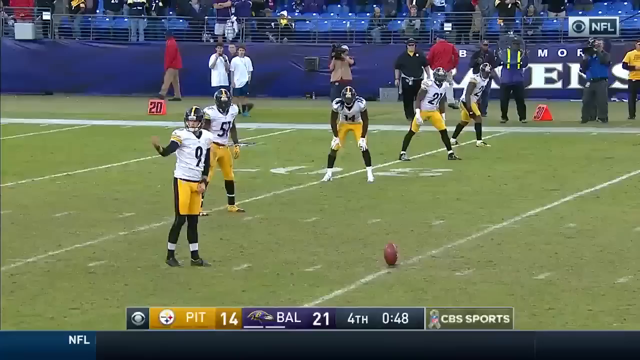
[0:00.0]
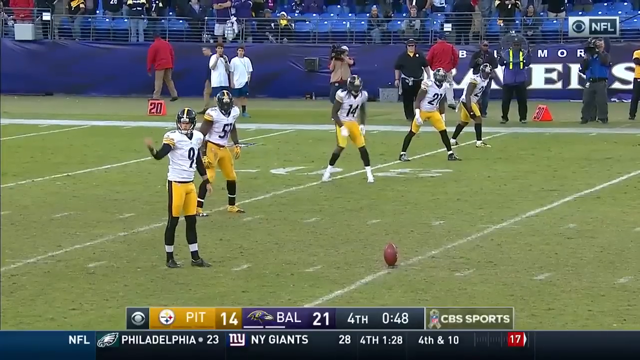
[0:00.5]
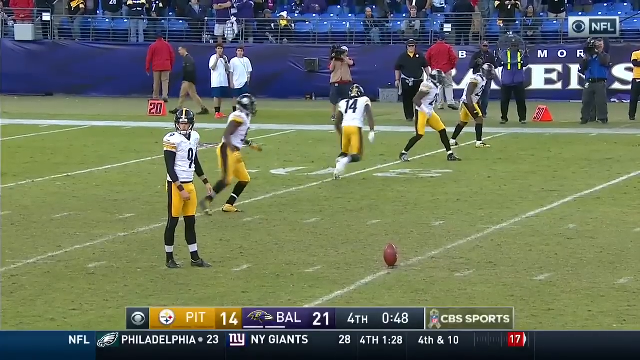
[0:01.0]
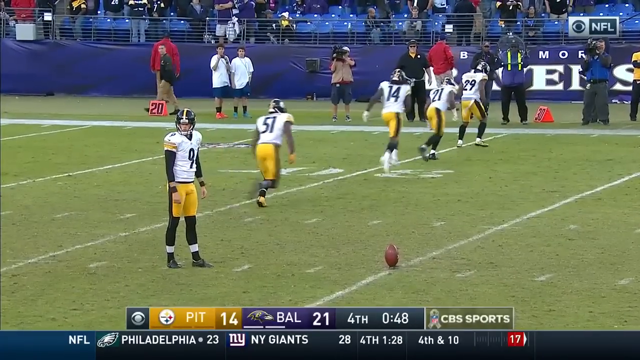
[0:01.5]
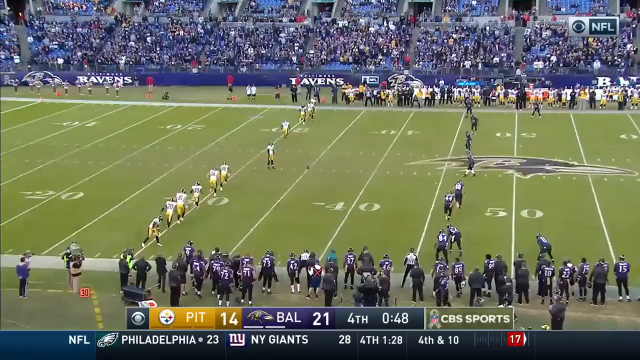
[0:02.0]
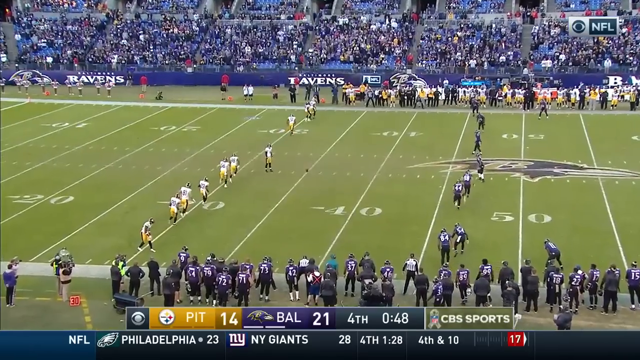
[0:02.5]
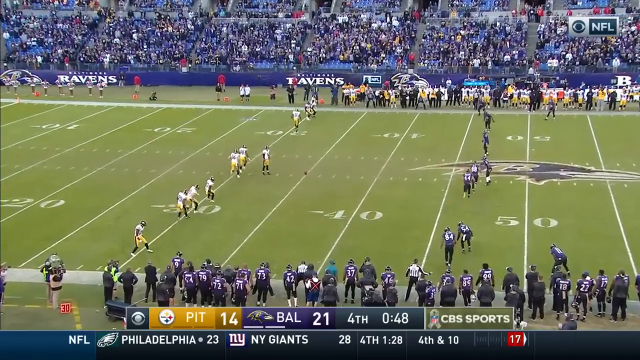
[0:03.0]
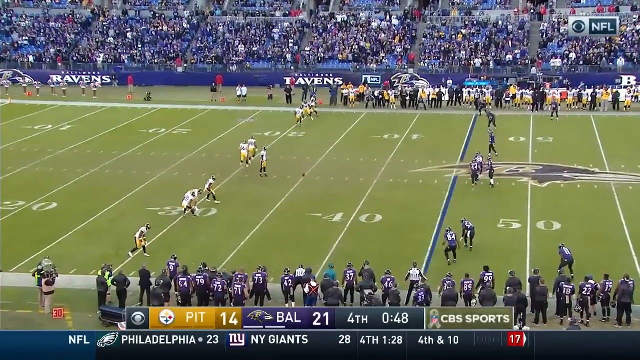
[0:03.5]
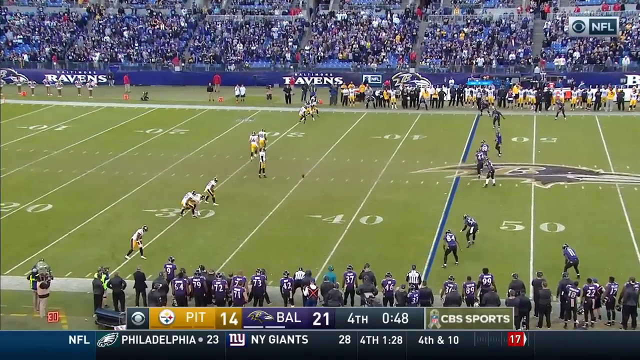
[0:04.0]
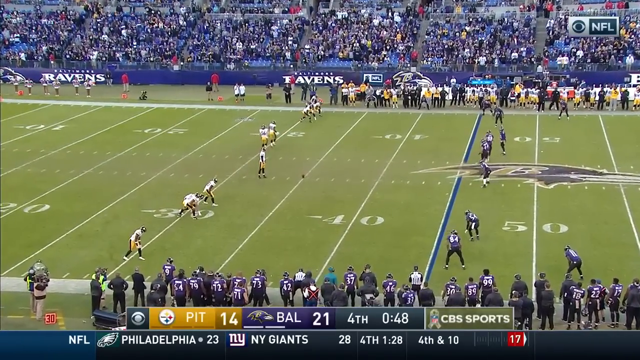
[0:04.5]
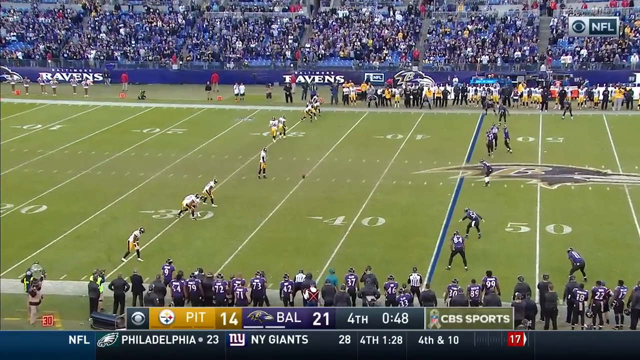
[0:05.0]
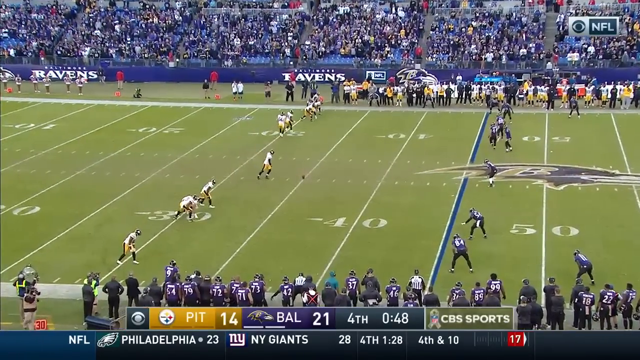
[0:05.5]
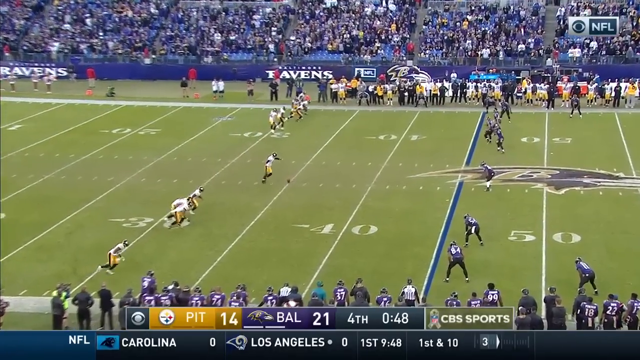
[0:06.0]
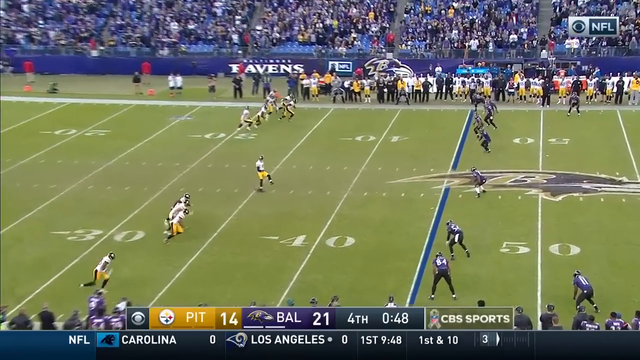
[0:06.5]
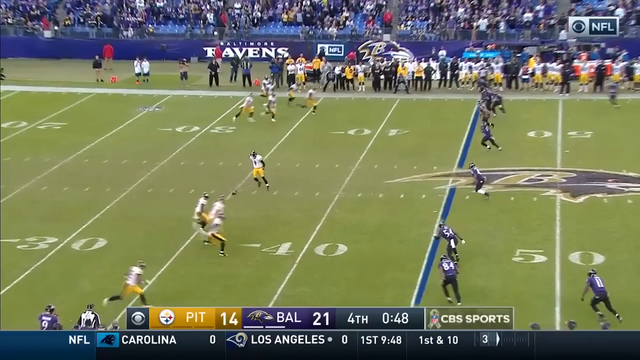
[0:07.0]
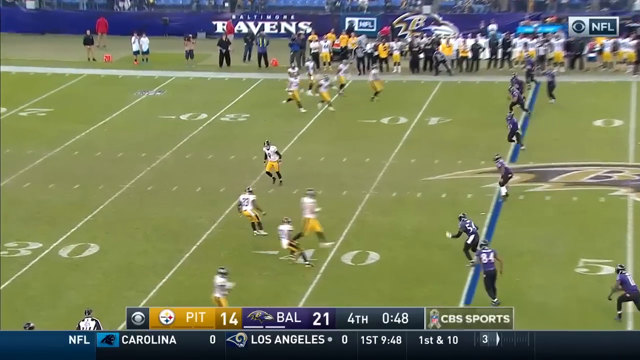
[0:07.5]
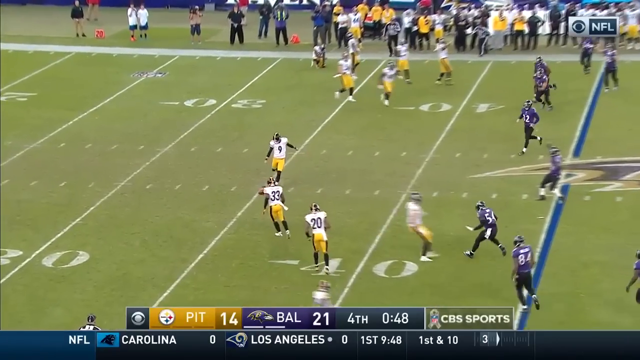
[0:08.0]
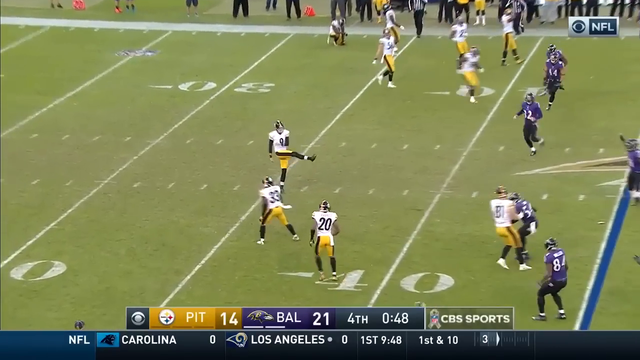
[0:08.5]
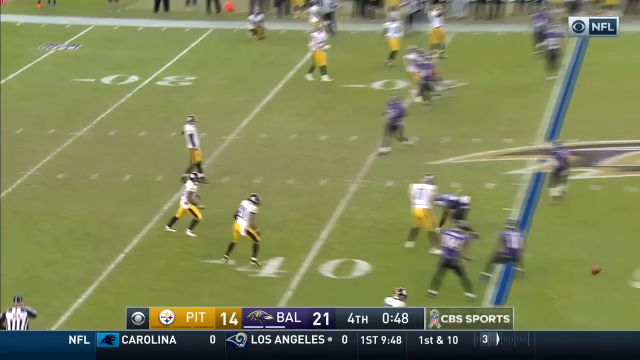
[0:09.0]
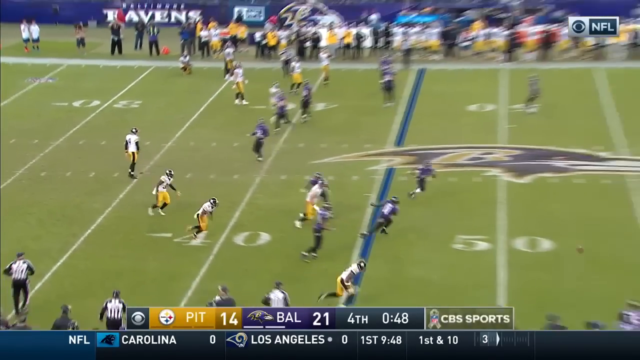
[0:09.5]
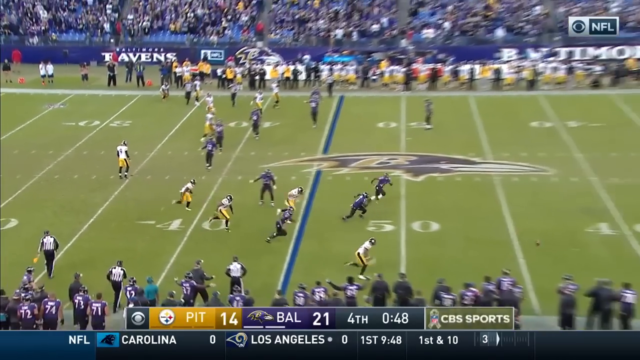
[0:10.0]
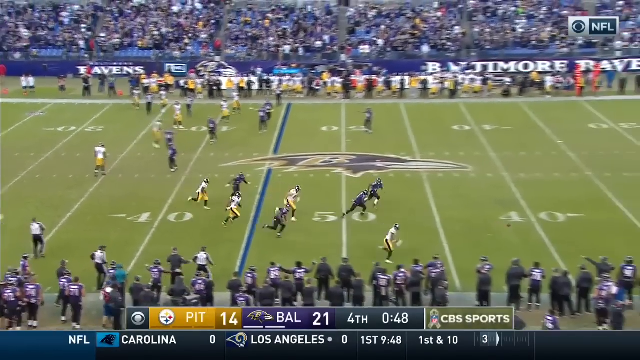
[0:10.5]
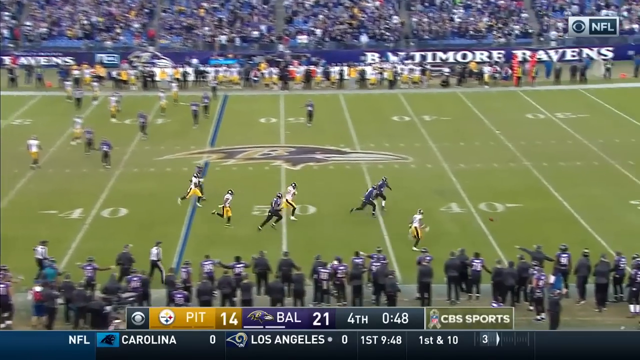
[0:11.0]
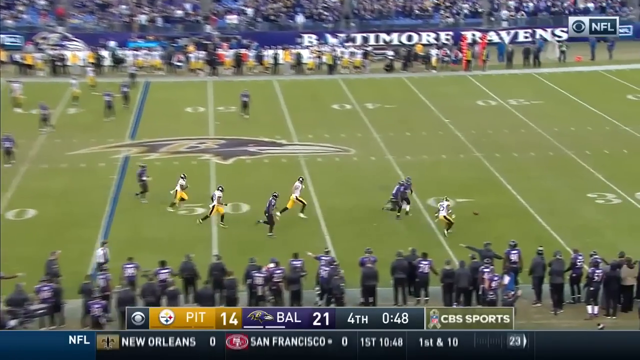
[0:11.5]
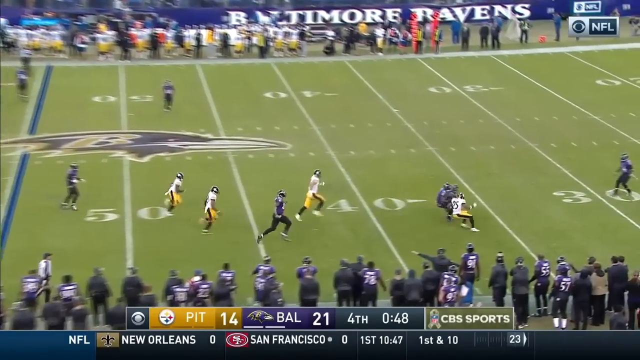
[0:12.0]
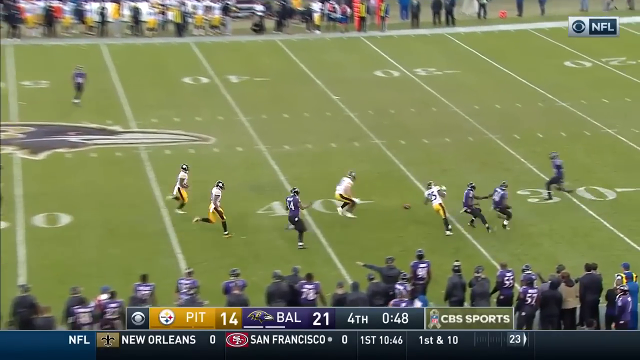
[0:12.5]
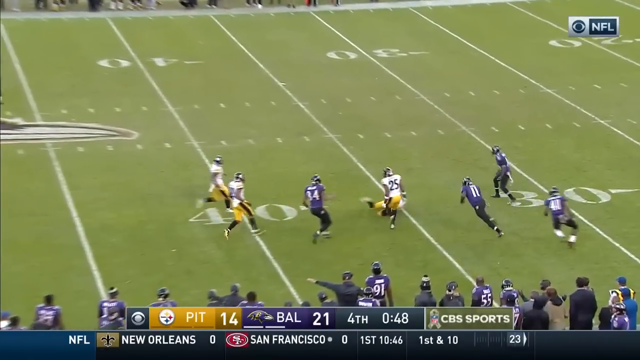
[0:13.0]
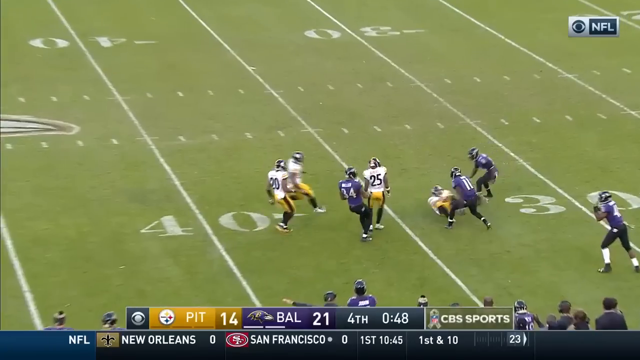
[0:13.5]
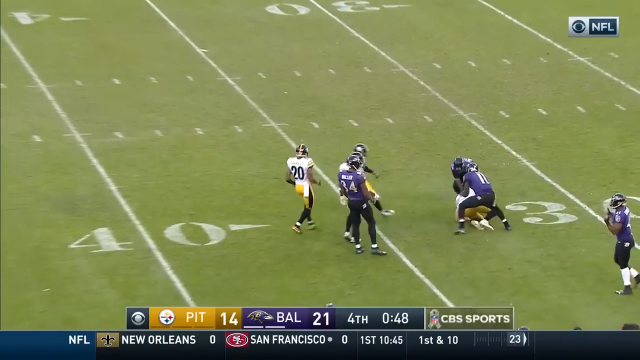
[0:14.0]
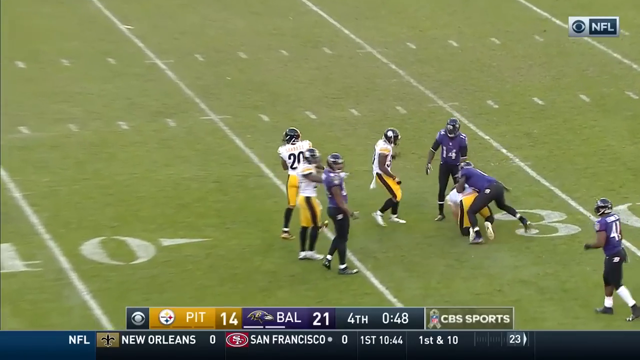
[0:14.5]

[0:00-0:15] On an onside kick, the players behind the Steelers kicker make the onside kick motion, and they kind of split off in different directions from where they were originally lined up. The kicker runs up to the ball and sort of misses it; the ball comes off the tee and doesn't really go anywhere. After it falls off the tee, he goes back to it and boots it hard down the field.